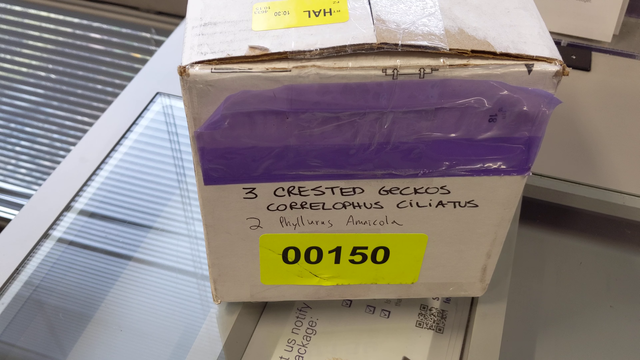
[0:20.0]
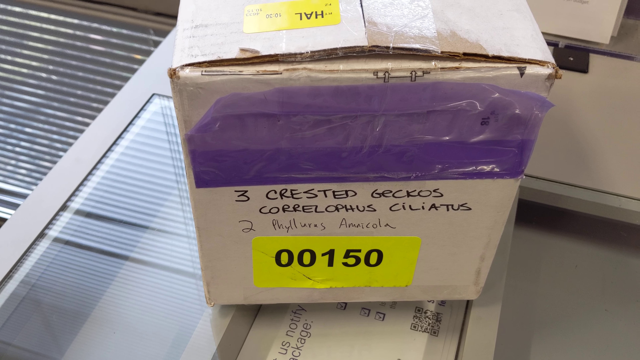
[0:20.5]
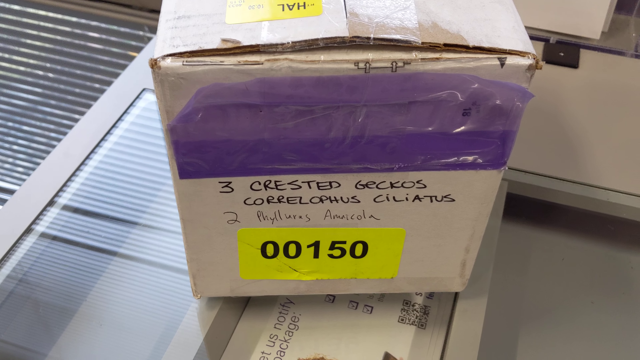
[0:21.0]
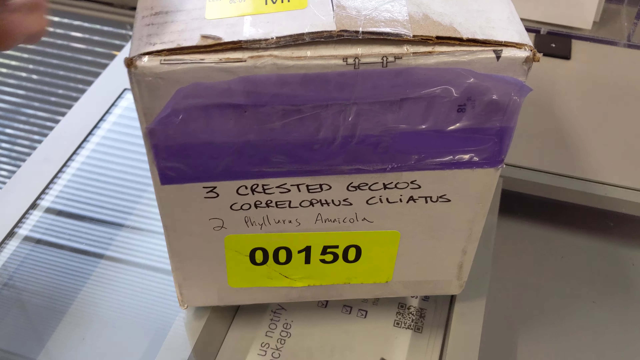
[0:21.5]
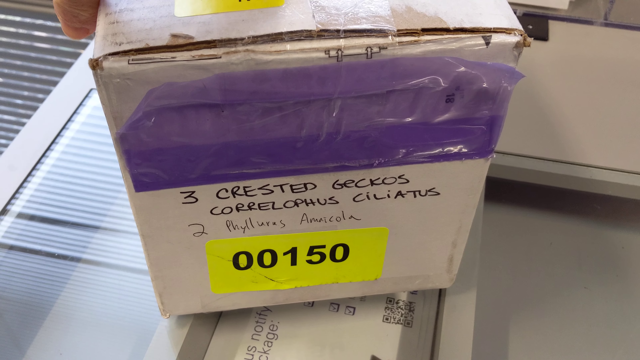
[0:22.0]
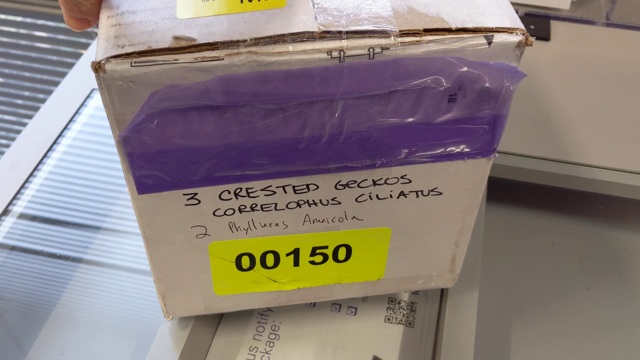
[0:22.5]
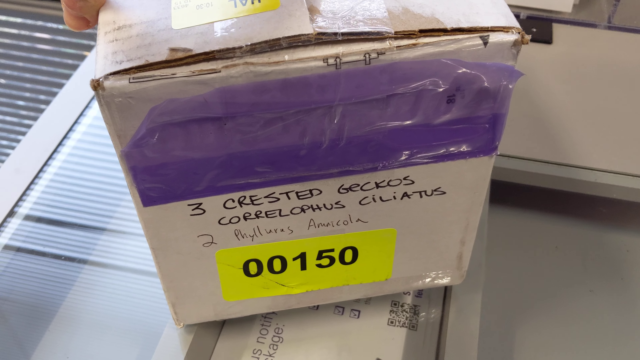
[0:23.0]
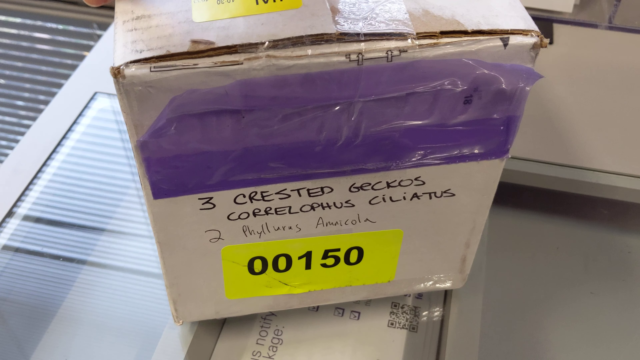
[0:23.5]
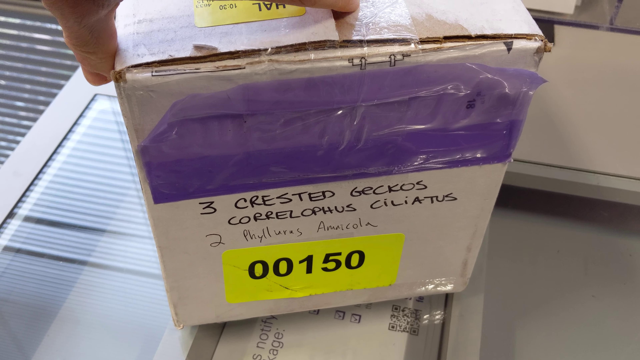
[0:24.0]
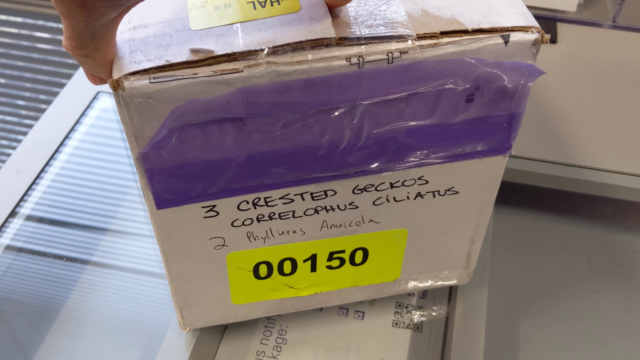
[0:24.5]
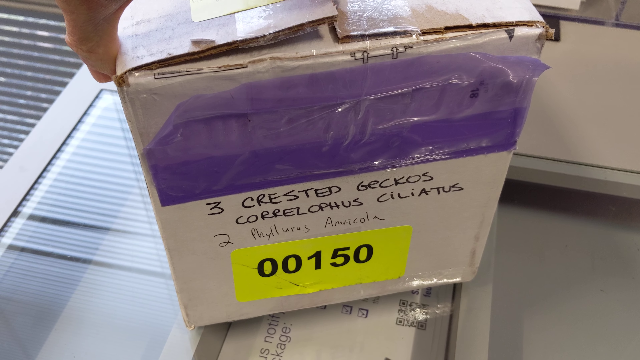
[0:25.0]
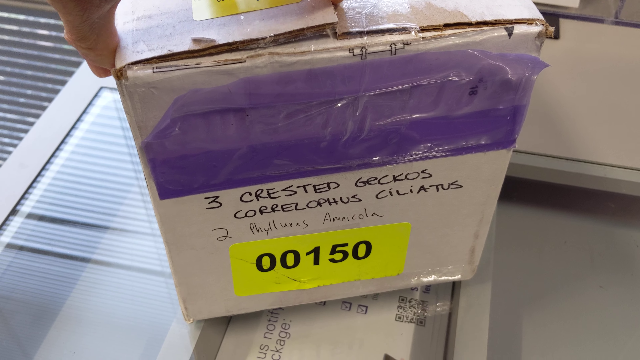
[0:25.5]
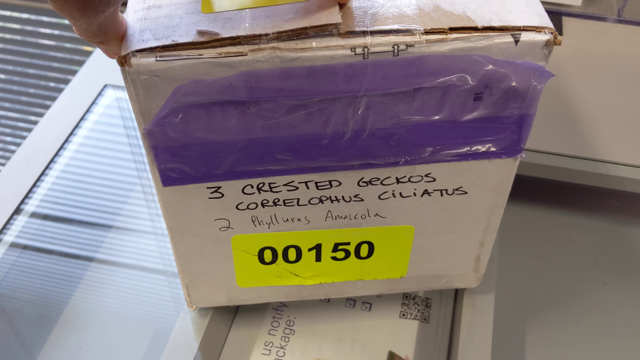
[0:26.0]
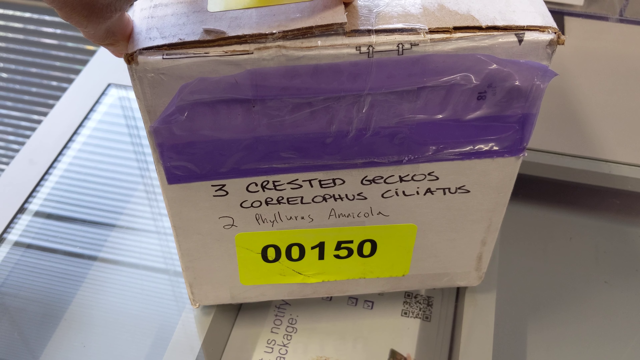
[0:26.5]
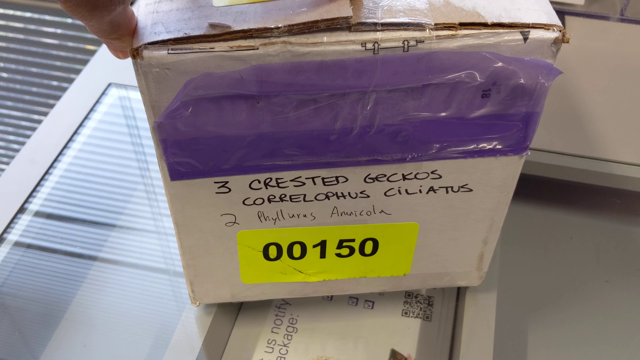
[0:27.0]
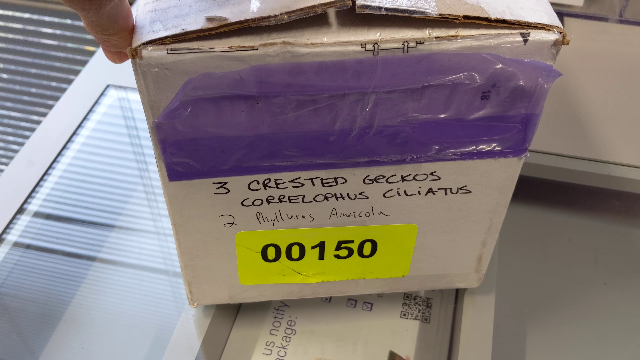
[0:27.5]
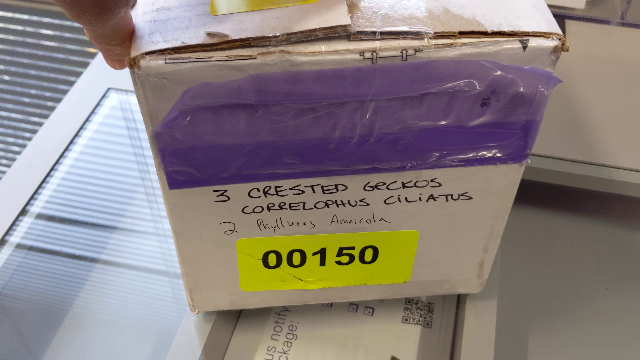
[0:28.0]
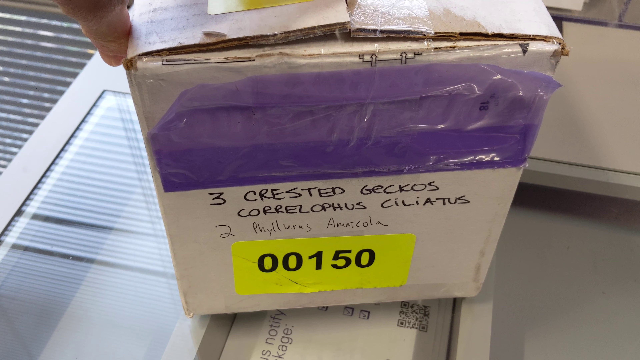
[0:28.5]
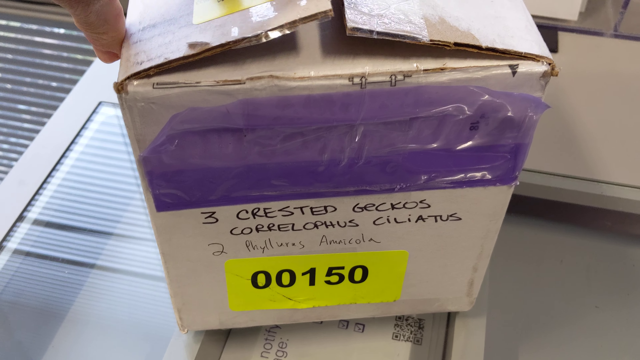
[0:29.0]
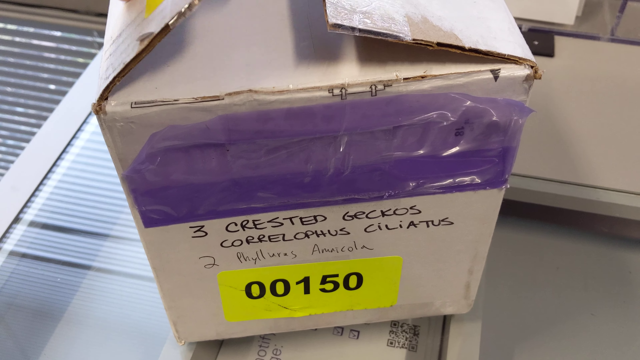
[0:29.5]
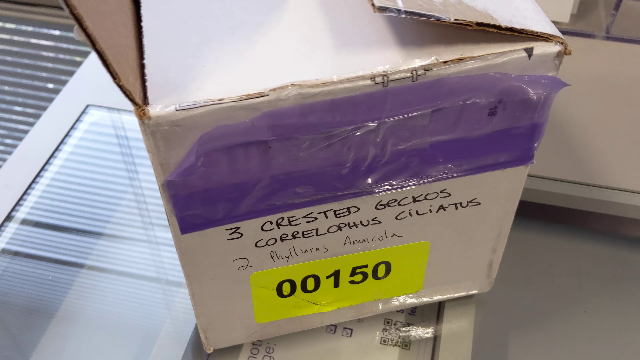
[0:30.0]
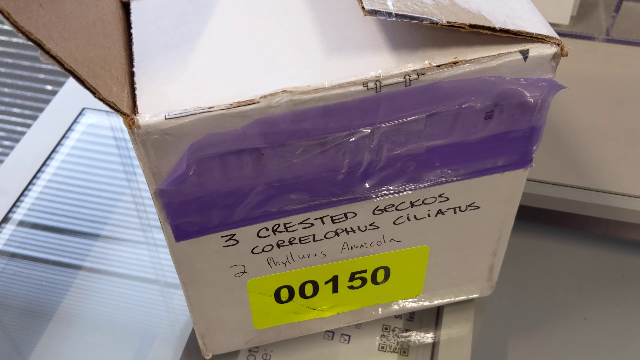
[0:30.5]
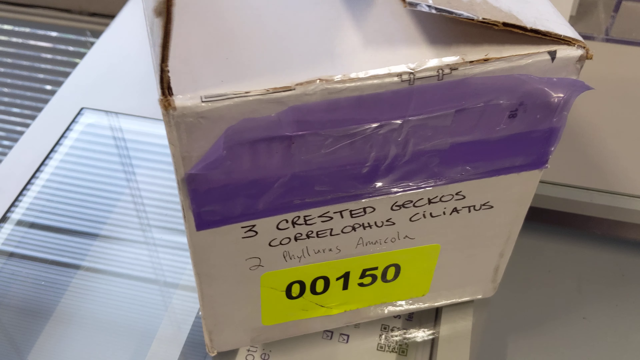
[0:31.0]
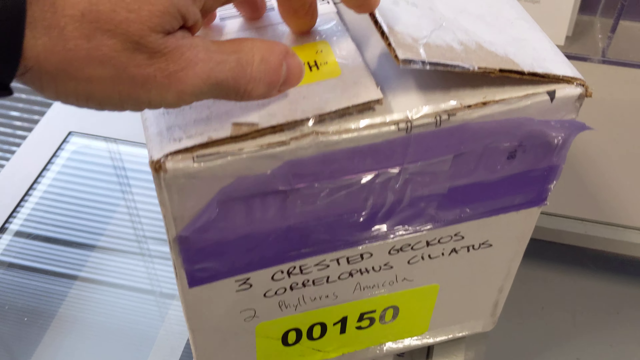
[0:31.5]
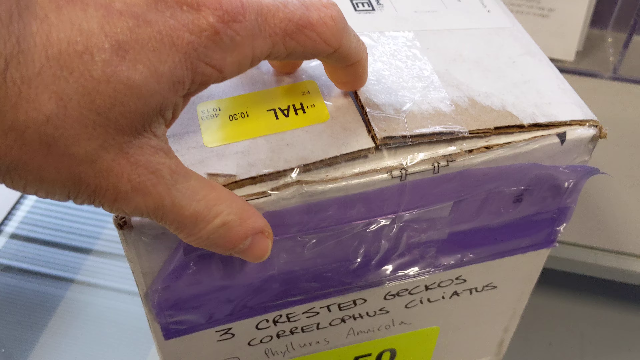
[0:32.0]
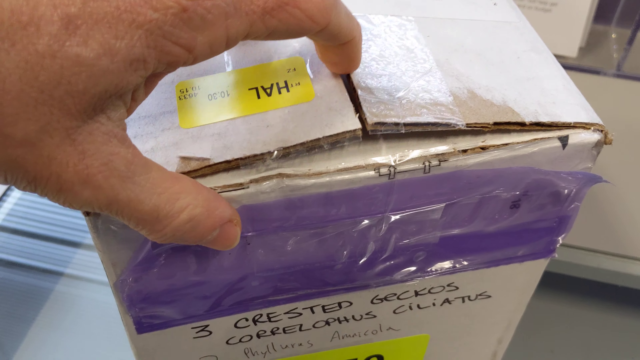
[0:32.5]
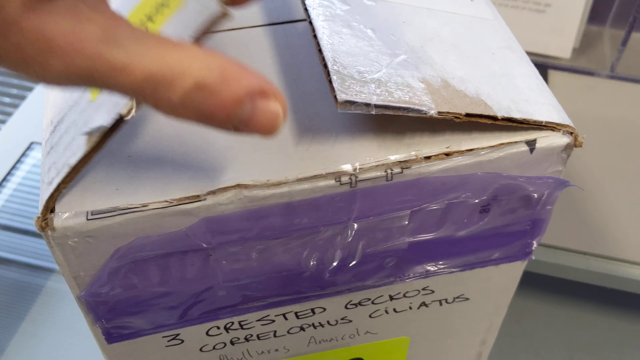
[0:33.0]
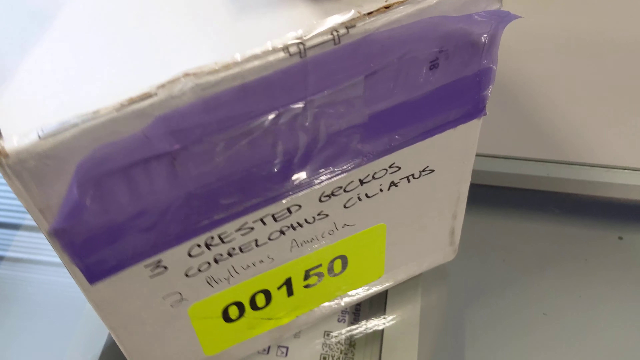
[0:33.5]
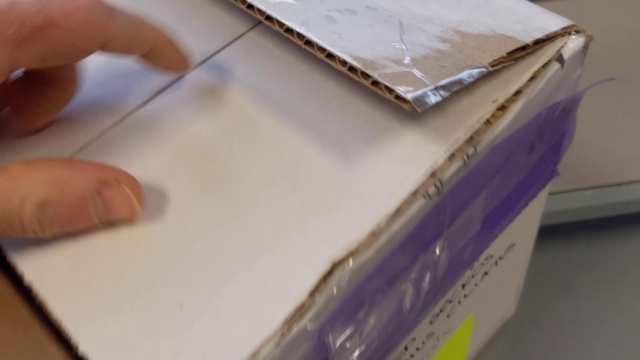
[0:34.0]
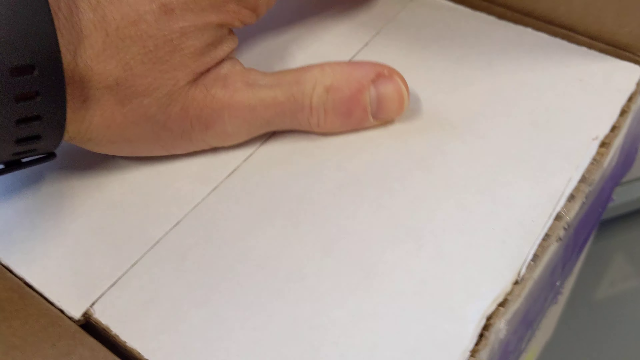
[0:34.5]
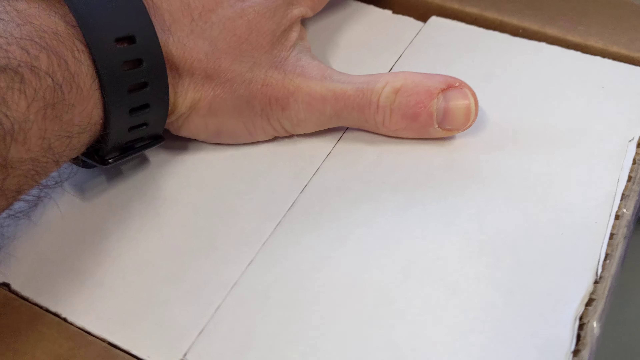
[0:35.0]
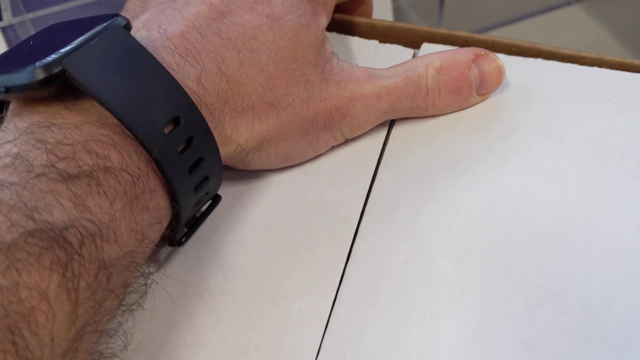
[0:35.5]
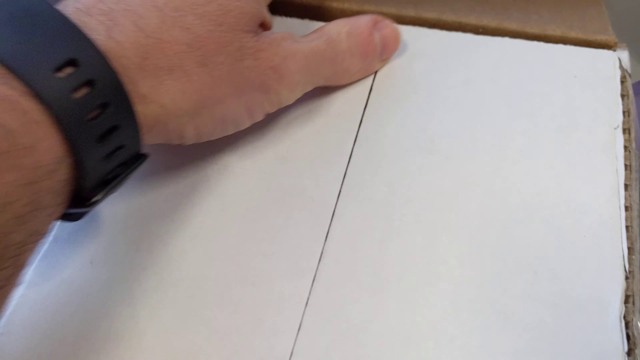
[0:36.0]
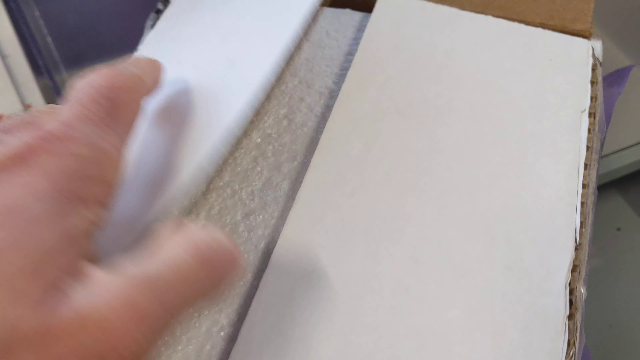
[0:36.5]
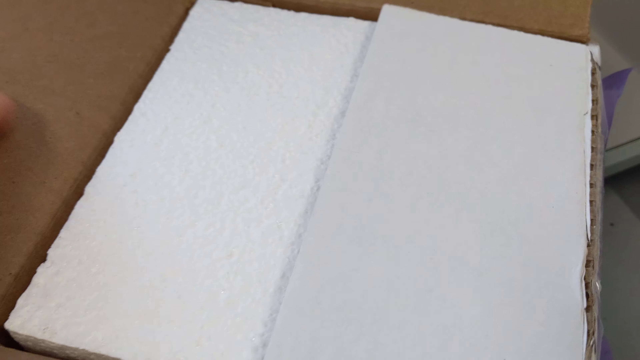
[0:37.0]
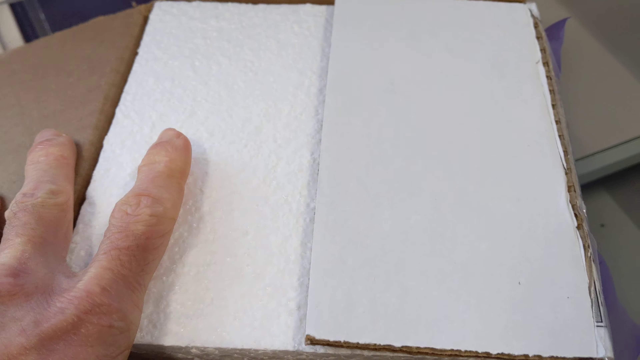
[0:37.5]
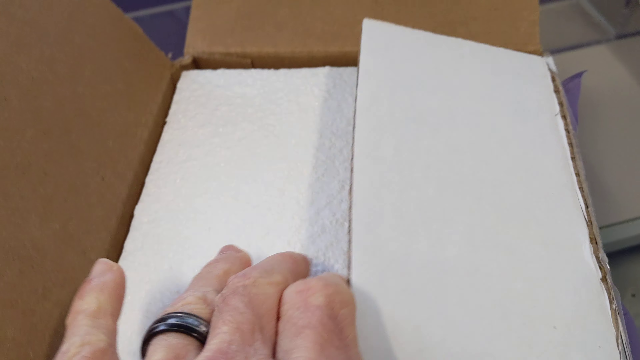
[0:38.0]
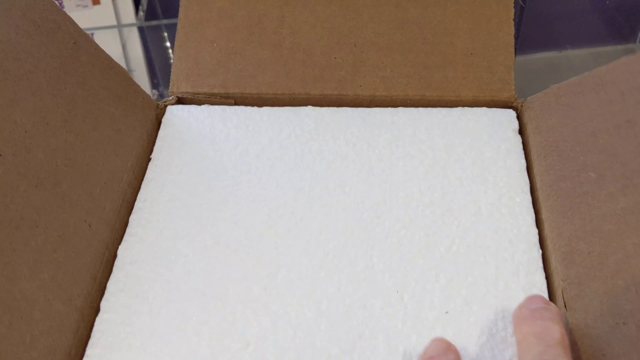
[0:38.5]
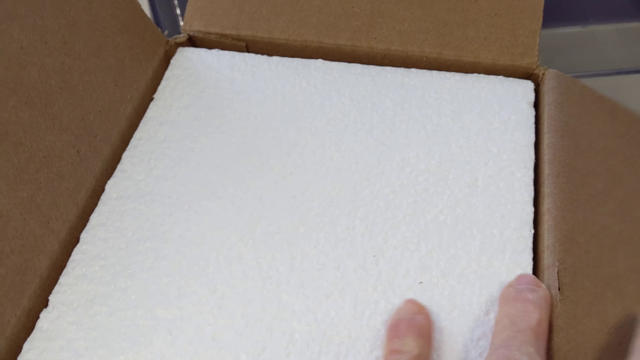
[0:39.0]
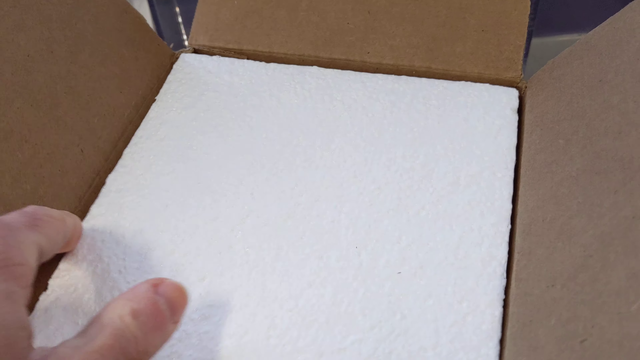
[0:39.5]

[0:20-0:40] Someone handles the box; only the thumb and forefinger of their left hand are visible at the top of the box and the top of the screen. The thumb is at the edge of the box near its left side and the finger is at the top of the left flap, pulling the flap's free edge upward so that it pivots where it is attached. The hand appears fuller on screen as the person pushes the flap back down, then pulls it back up. The whole box then appears to rotate anticlockwise as the camera moves around it. The flap on the opposite side is pushed away from the top of the box, opening it away from the camera. This reveals two more flaps inside, joined to the other two sides of the box; the left one is opened first, then the right one is opened and pulled down to the right. With all the flaps lifted, a white polystyrene cover is revealed, and the hand is just starting to remove it.